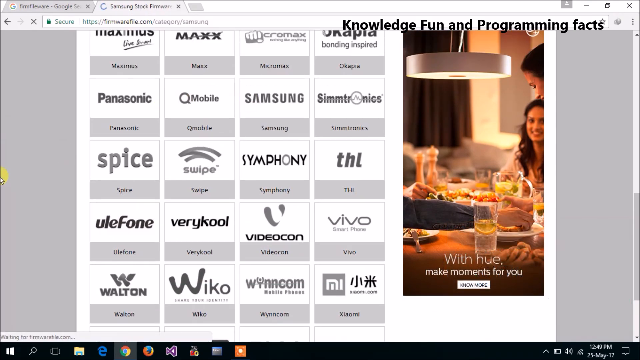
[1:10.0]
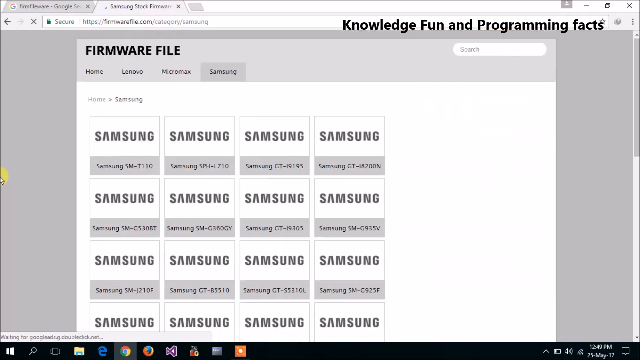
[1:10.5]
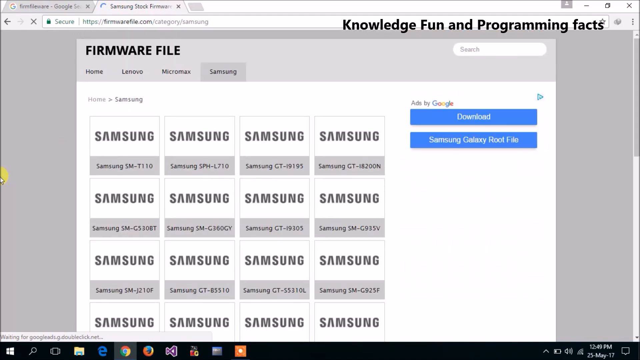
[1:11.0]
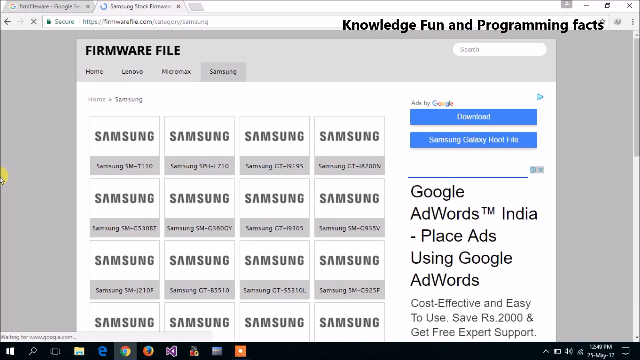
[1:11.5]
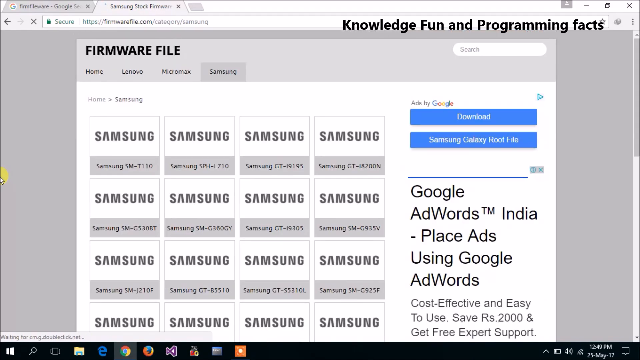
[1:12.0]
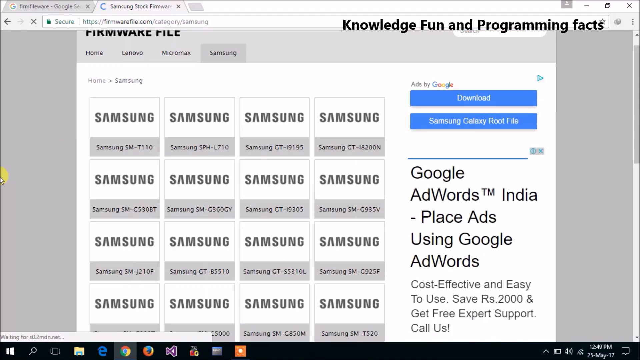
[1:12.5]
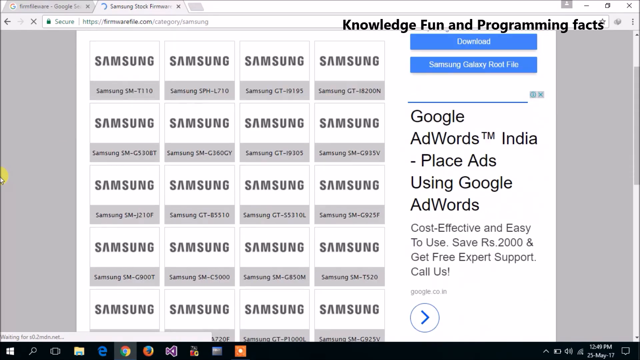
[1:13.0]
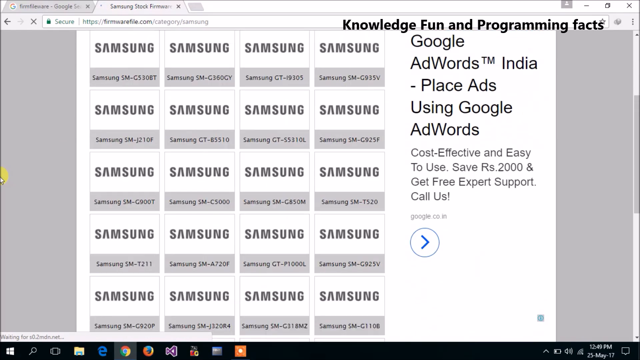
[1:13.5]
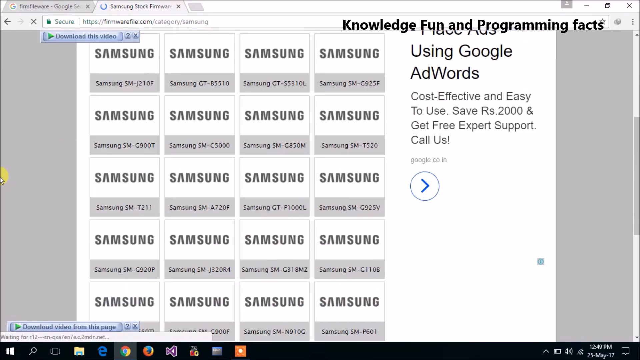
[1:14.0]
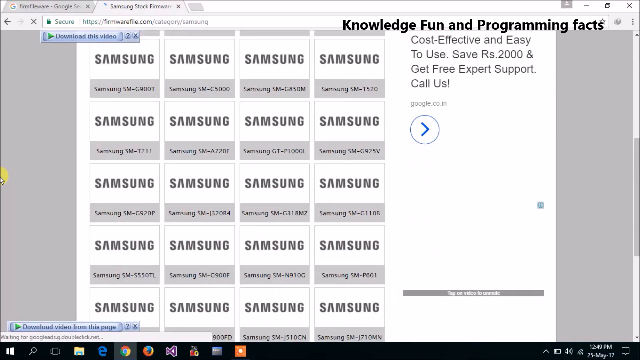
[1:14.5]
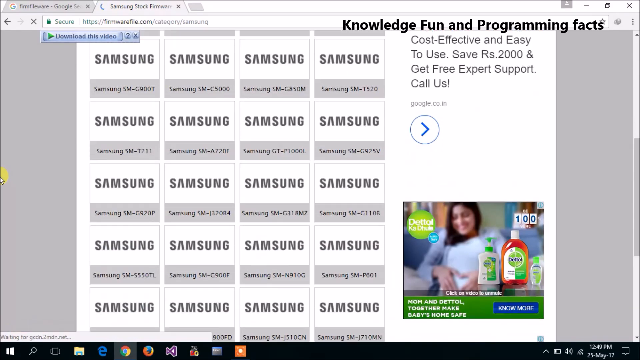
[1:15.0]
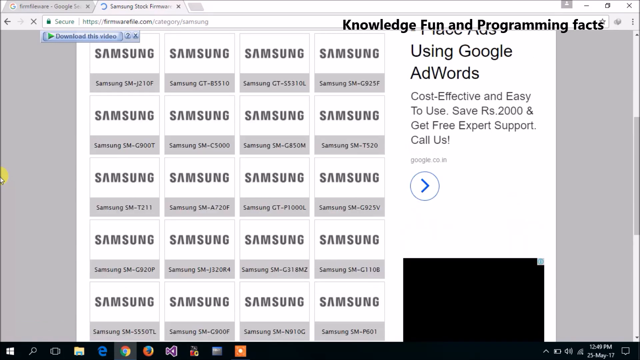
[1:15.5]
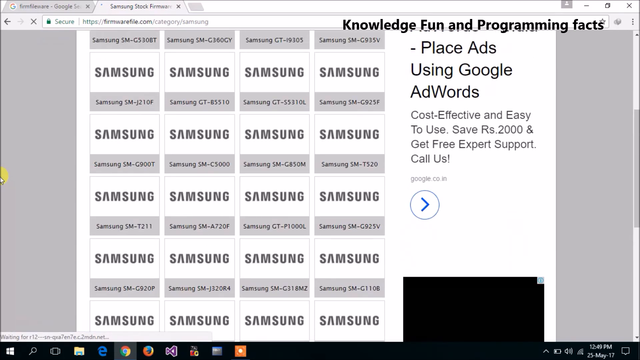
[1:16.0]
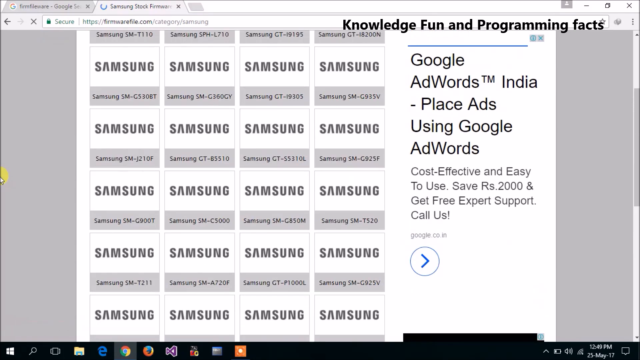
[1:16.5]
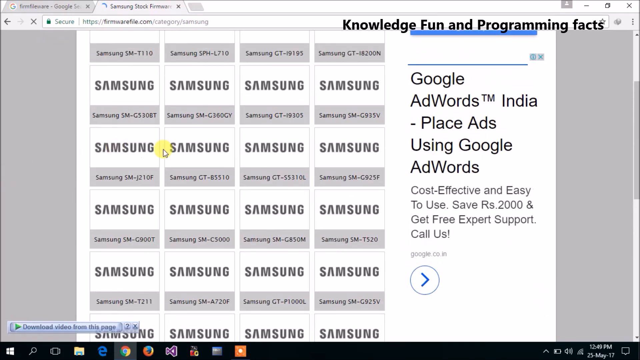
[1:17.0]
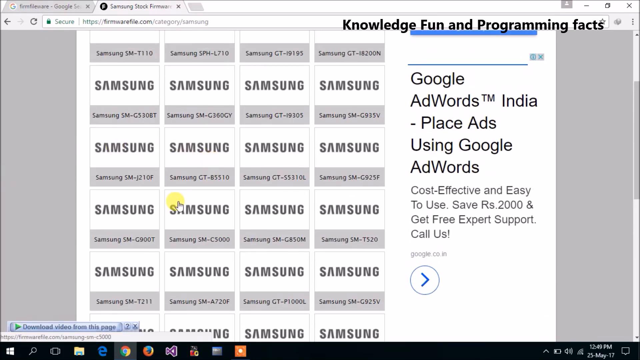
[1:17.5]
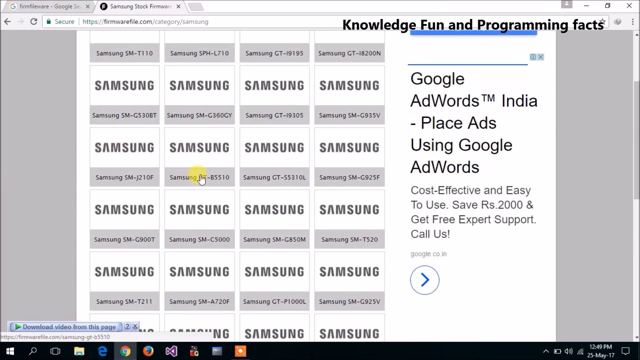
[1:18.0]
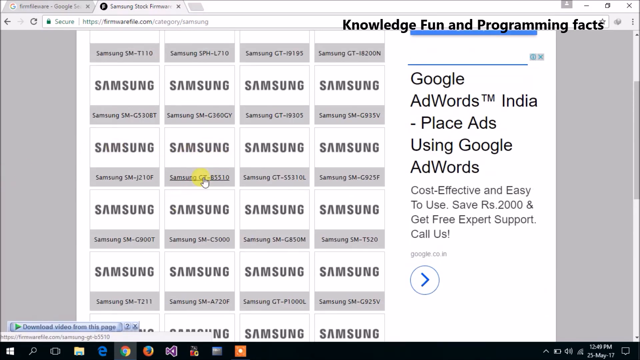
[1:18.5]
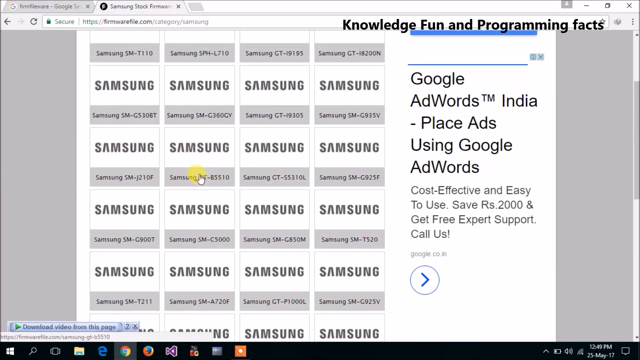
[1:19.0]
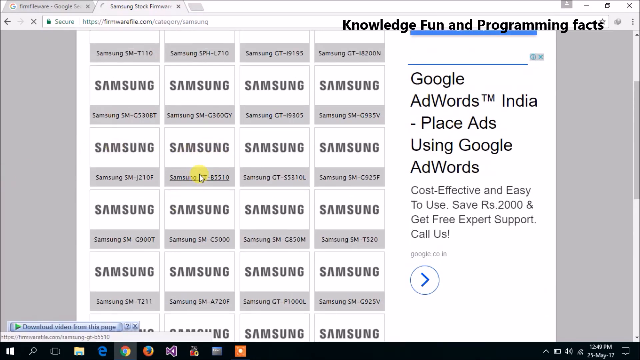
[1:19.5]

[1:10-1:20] The screen shows rows of different company logos. On the right of the screen is an image of somebody at a dinner table smiling with another person who seems to be a waiter. The video then transitions to the Samsung section of the Firmware File page. Below are rows showing the Samsung logo, with about four rows visible on the screen, and underneath each Samsung logo is text showing different codes. On the right-hand side of the screen is text related to Google AdWords India. The user continues scrolling down the page, with the cursor with a yellow circle underneath it hovering around, and then appears to click one of the Samsung logos. At the bottom of the screen is an ad image for Dettol: a blurry image of a black-haired woman smiling in the background just behind some bottles of Dettol, with the number 100 in the top right corner of the image and the text Dettol in the top left.